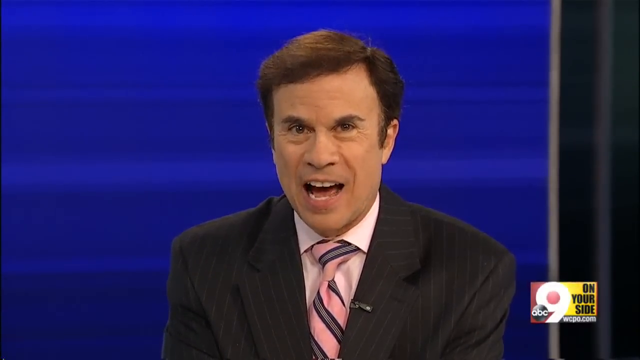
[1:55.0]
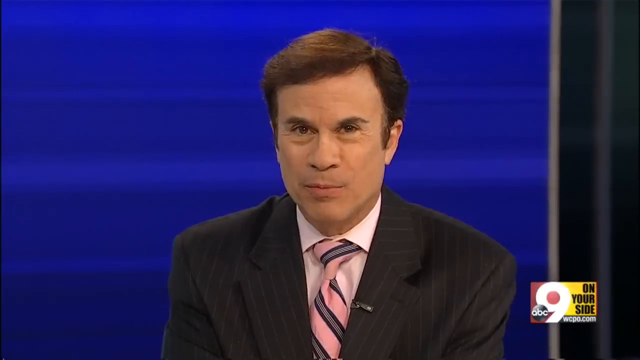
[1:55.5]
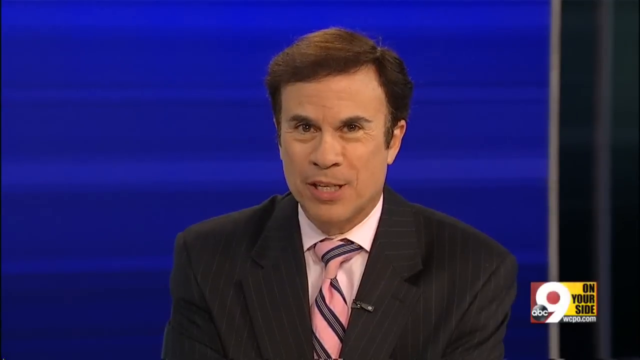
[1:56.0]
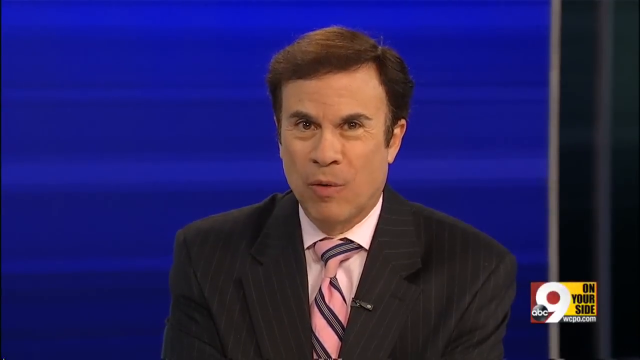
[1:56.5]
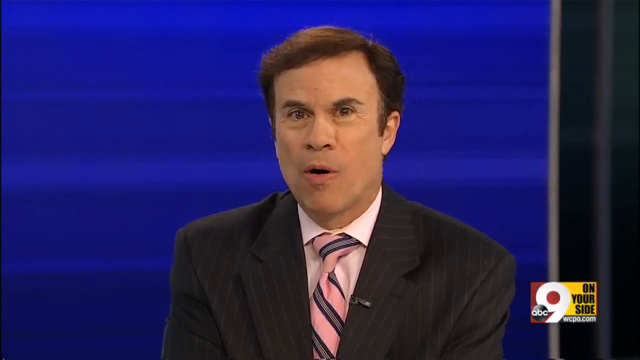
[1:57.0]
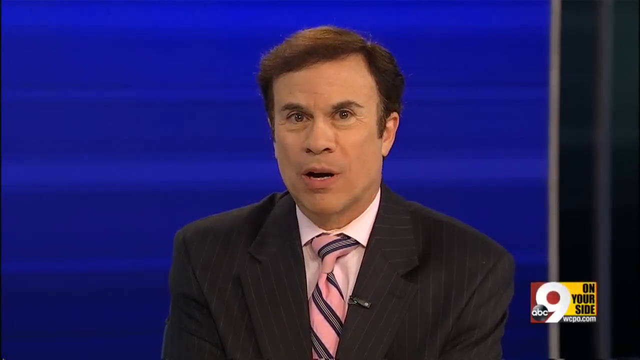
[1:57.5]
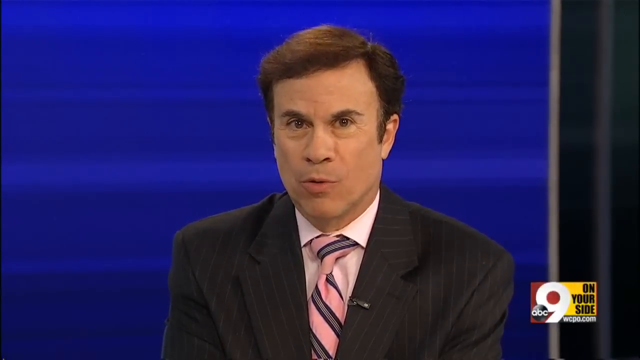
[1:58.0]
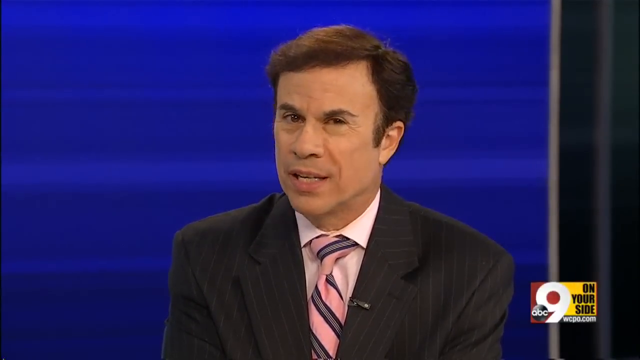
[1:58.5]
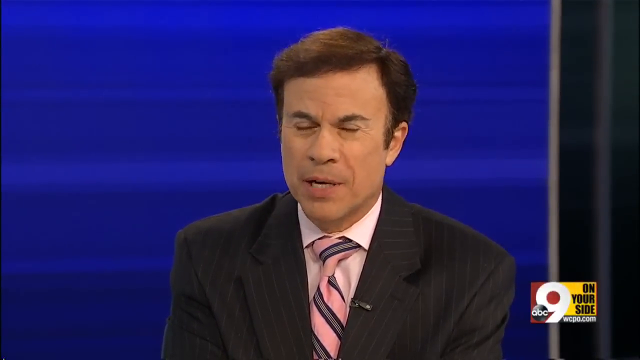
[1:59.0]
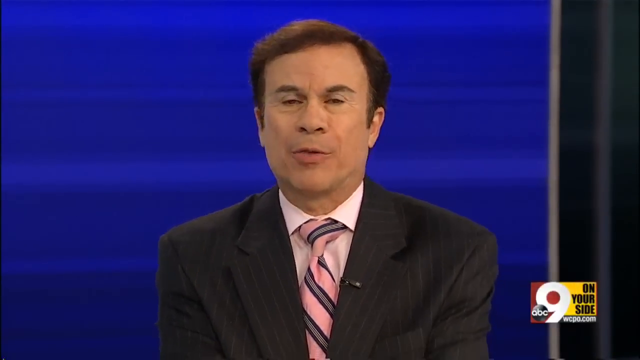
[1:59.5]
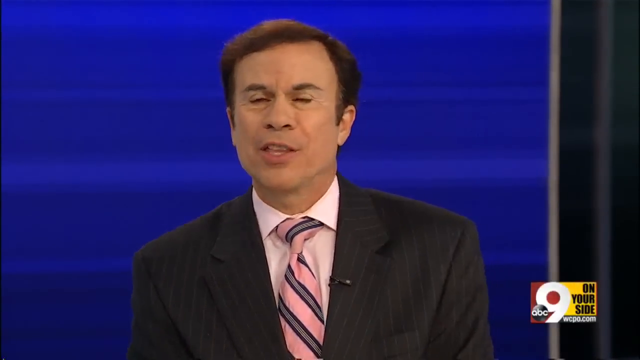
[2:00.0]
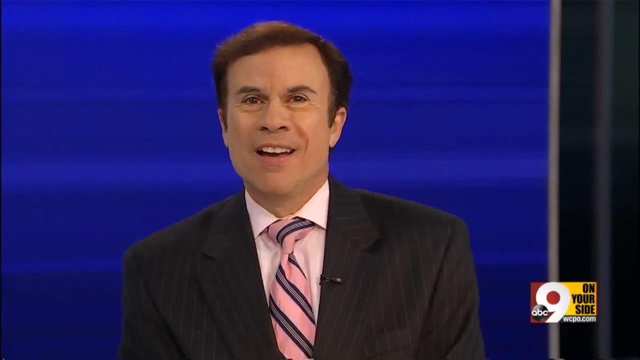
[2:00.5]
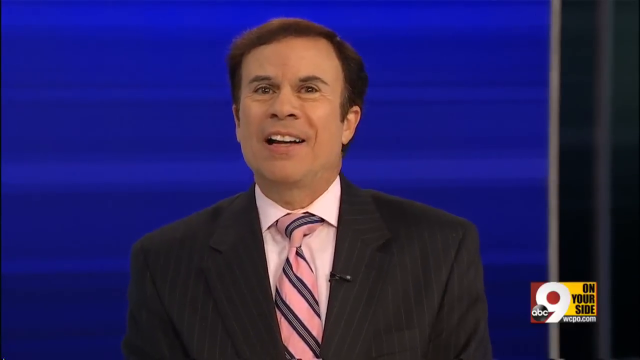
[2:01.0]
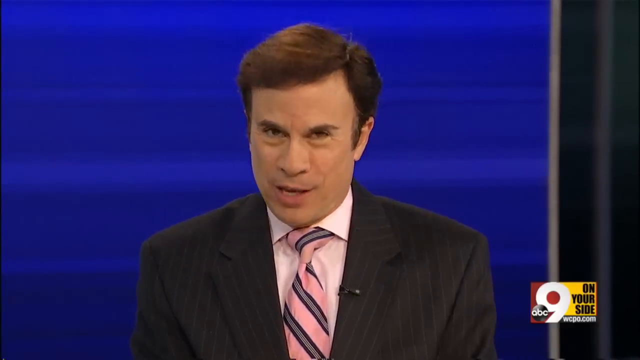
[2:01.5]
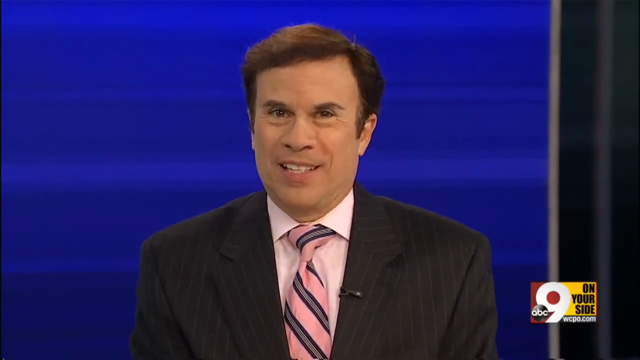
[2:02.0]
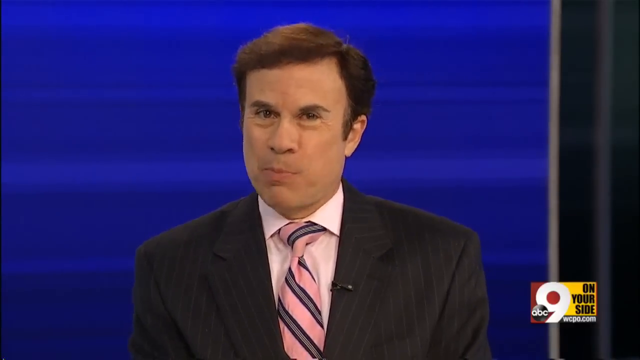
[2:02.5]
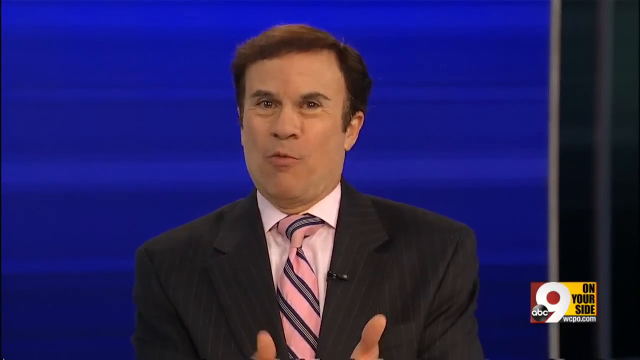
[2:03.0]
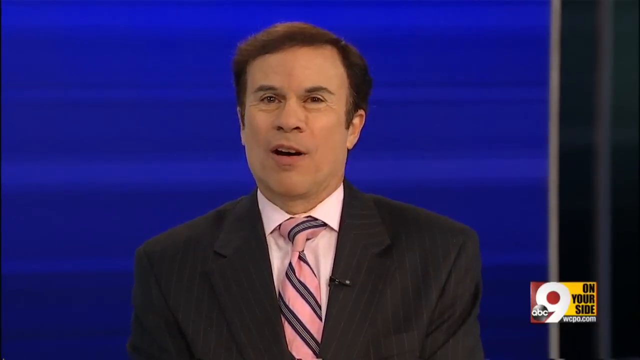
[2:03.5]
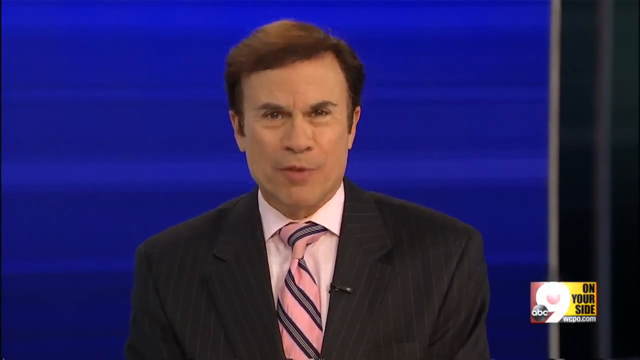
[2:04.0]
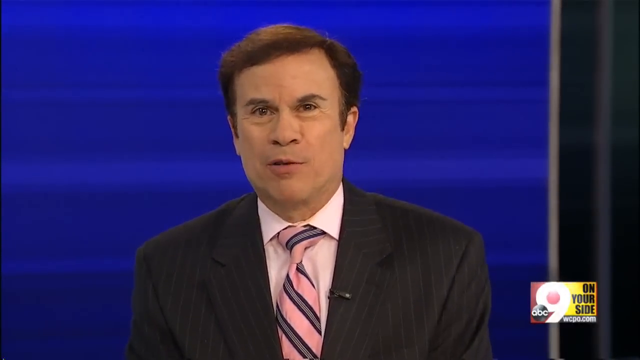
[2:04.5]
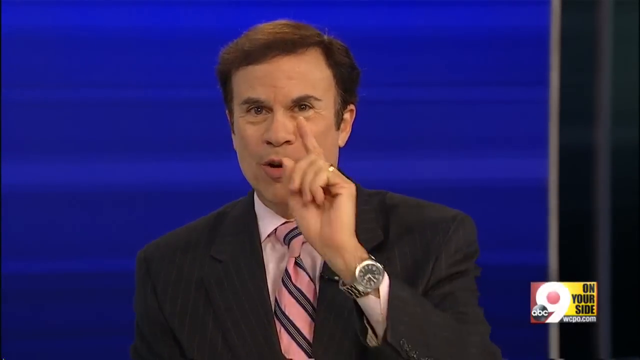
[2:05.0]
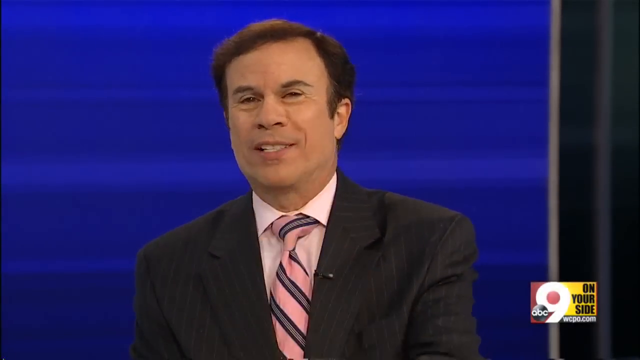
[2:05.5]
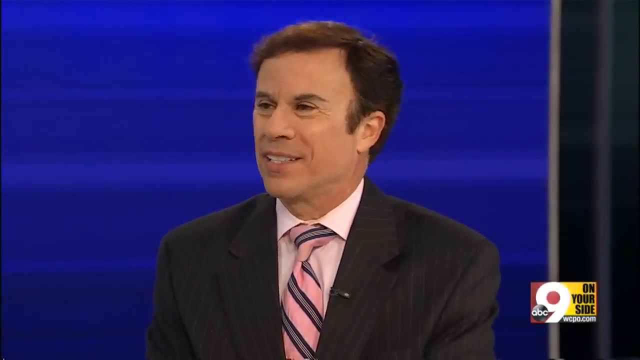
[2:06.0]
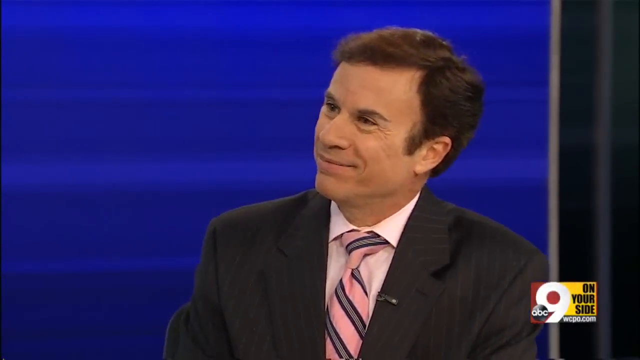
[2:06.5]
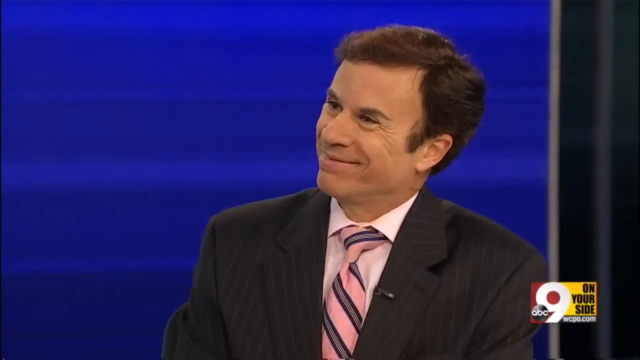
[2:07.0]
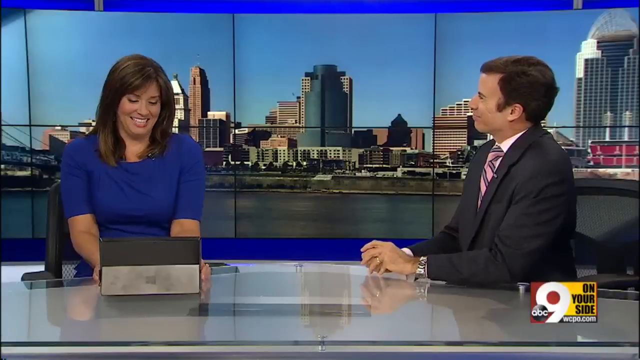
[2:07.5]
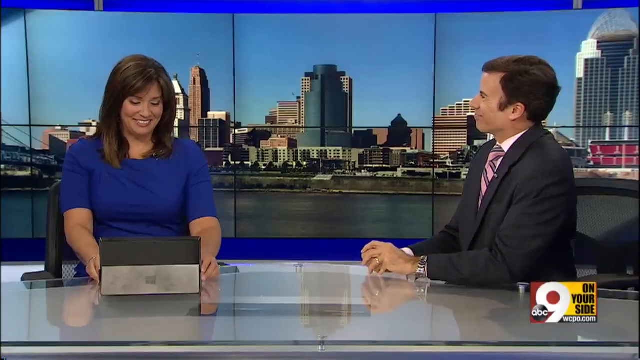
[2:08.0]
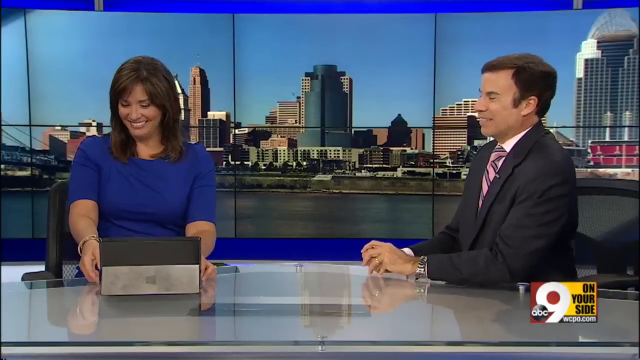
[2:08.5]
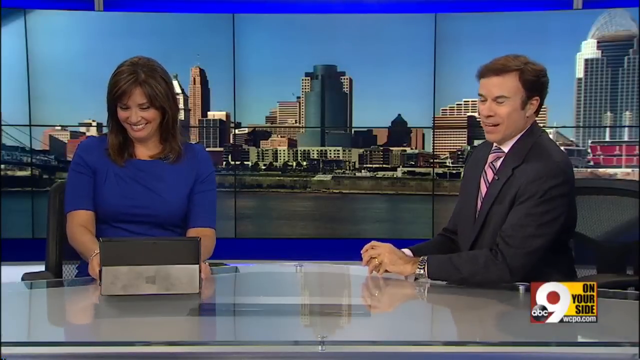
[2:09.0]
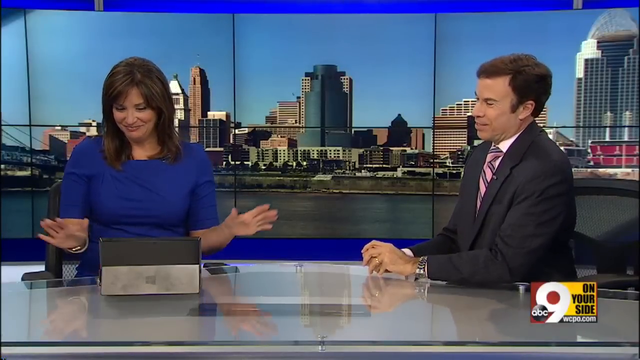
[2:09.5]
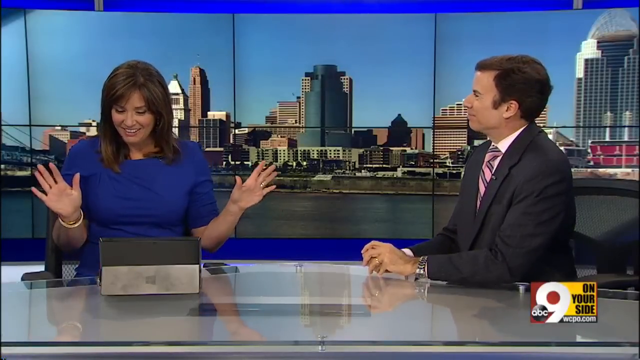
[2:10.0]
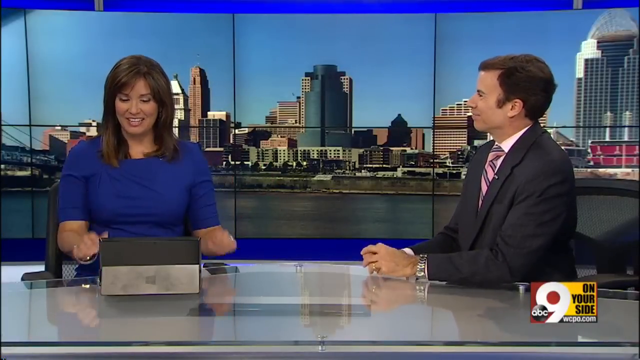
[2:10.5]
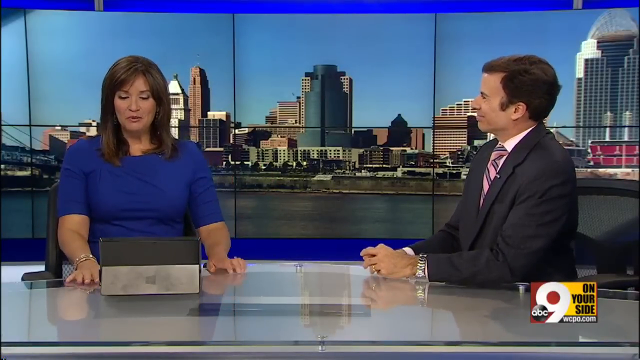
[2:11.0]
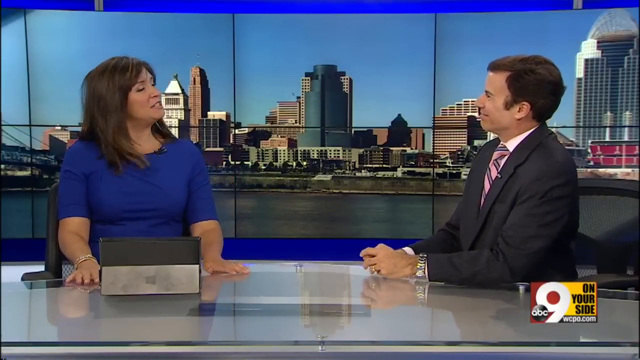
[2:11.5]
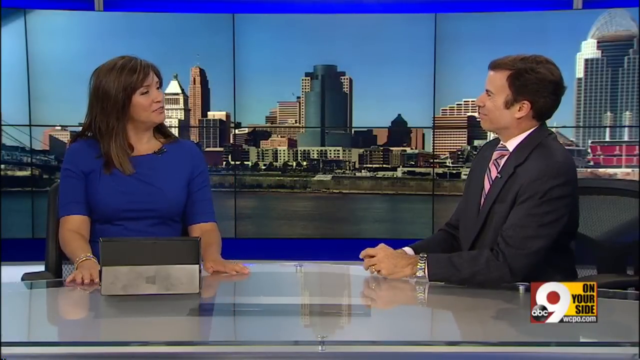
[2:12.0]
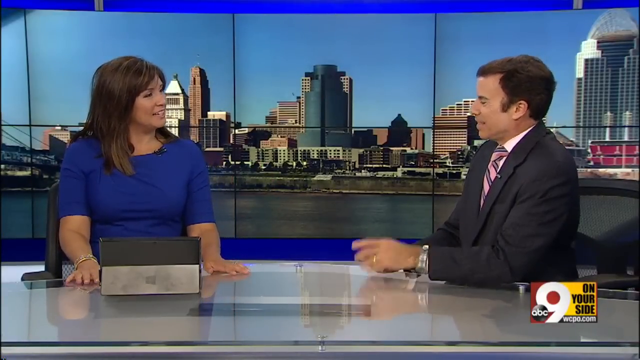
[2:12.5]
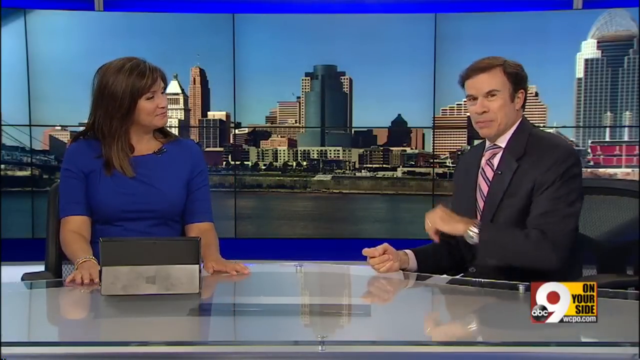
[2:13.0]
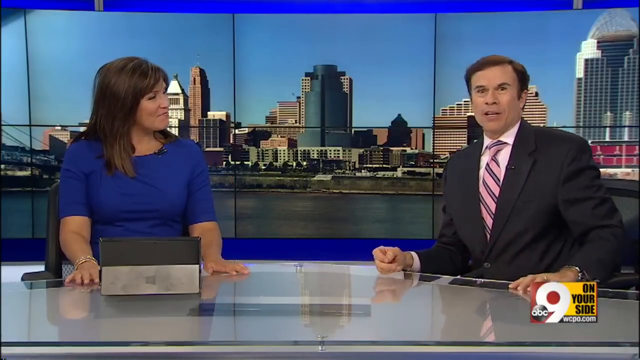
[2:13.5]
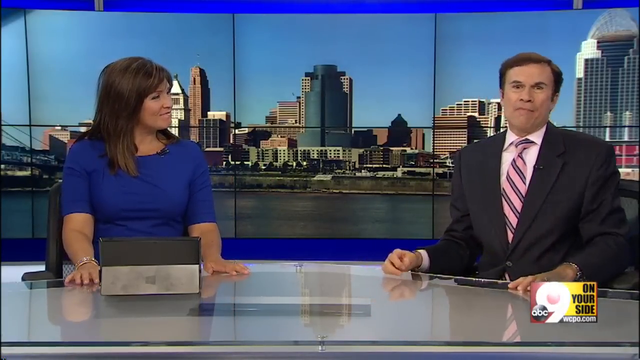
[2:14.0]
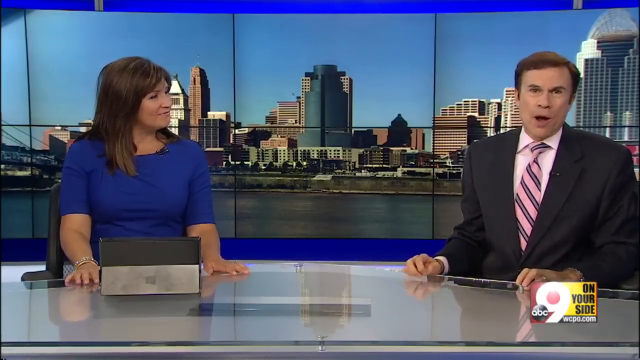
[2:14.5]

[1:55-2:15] A Caucasian man with brown hair, who looks about 60, sits at a desk wearing a black sports jacket, a white button-down shirt, and a white tie with black and blue stripes. He looks kind of like a news anchor and is speaking, with what looks like a microphone on his lapel. Behind him is a dark blue background, and a small square in the lower right corner reads "ABC 9 on your side." The camera zooms out to show him at the desk with a Caucasian or possibly Hispanic woman who also looks like a news anchor. She has very white teeth and shoulder-length brown hair, wears a blue dress and a gold bracelet, and smiles and laughs at him. There is a box in front of her on the desk. Behind them is a graphic of an urban skyline with the tops of skyscrapers and a blue sky. The two anchors appear to be chatting with each other as a wrap-up of the segment. He smiles a little as he talks, and at one point he points forward.